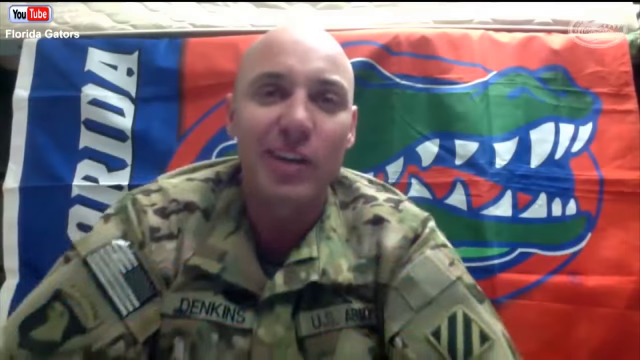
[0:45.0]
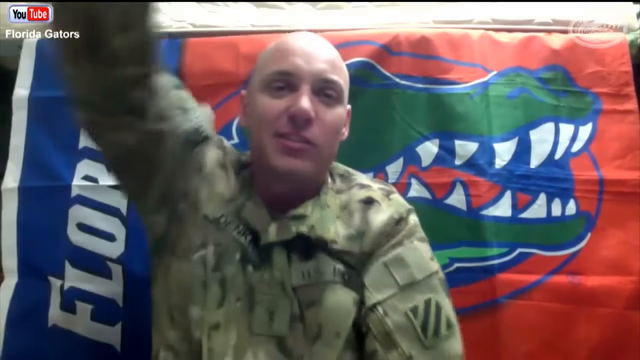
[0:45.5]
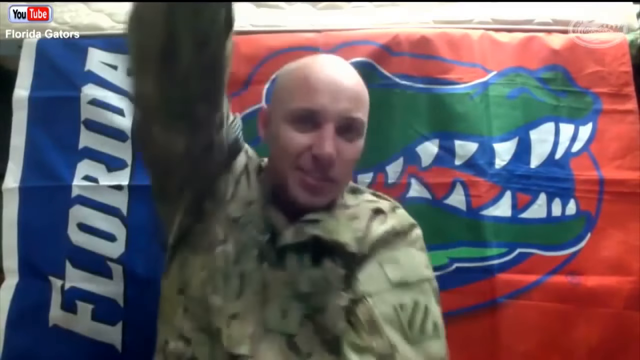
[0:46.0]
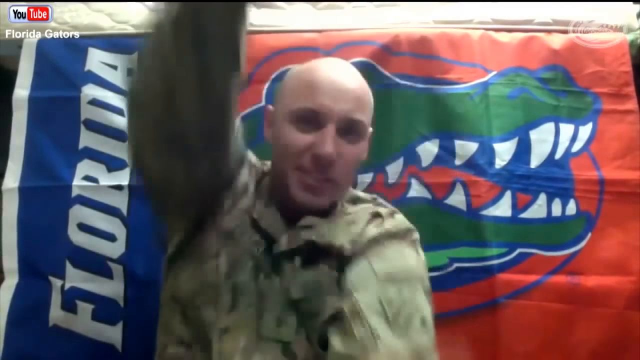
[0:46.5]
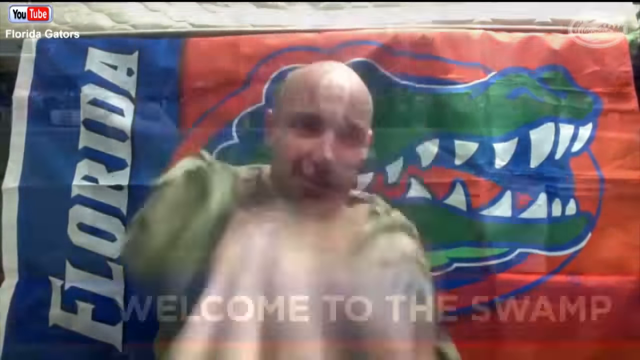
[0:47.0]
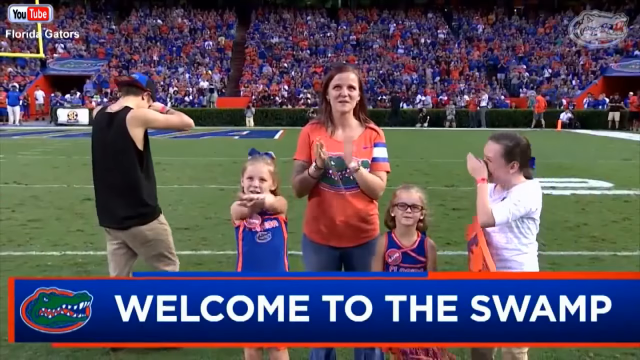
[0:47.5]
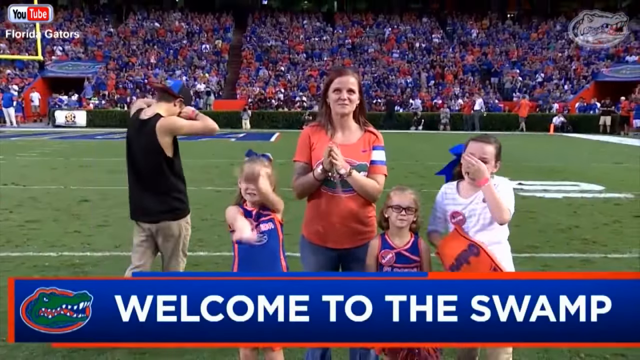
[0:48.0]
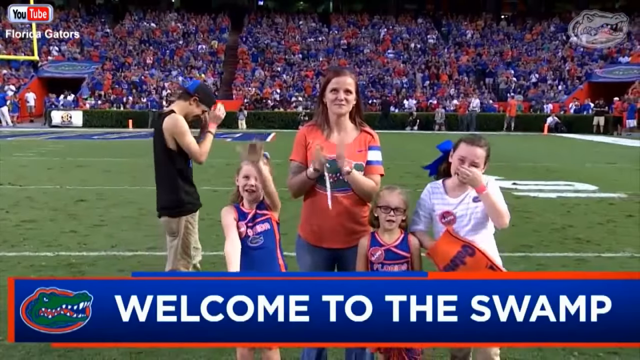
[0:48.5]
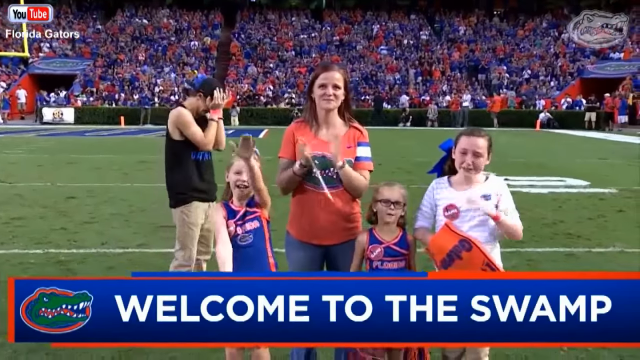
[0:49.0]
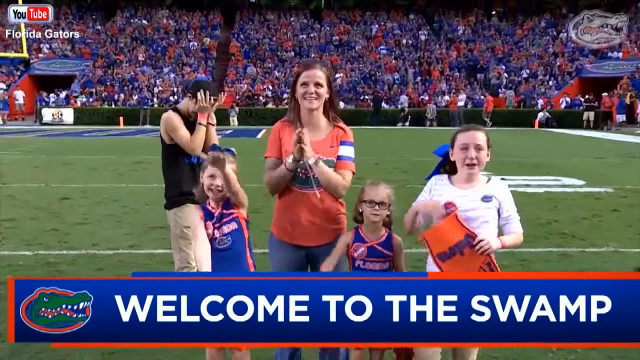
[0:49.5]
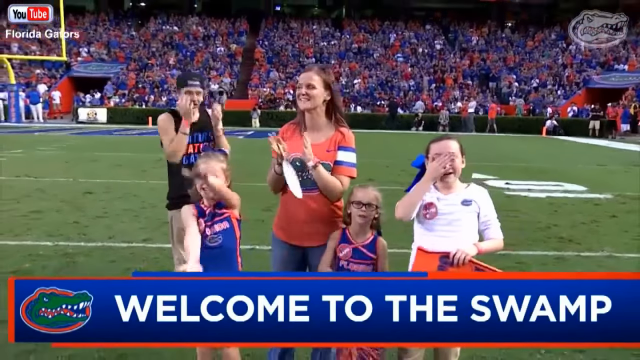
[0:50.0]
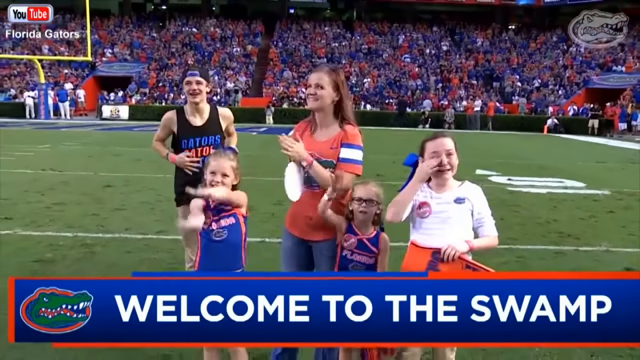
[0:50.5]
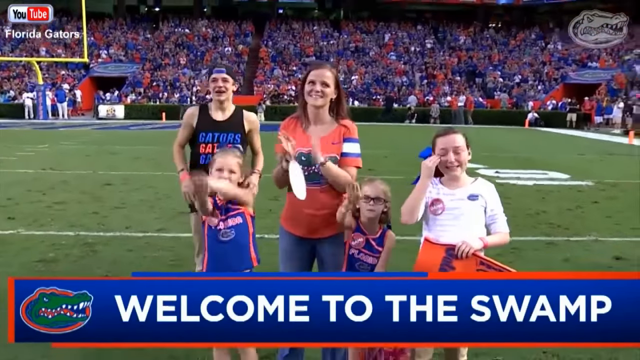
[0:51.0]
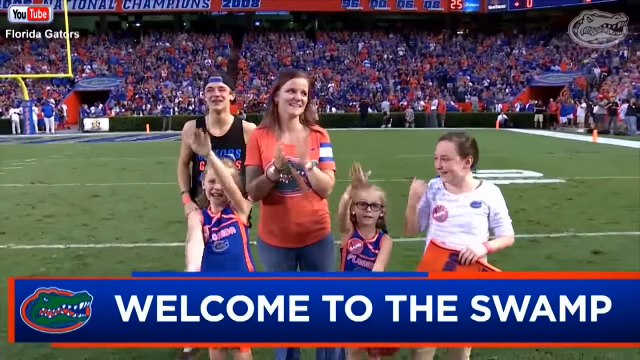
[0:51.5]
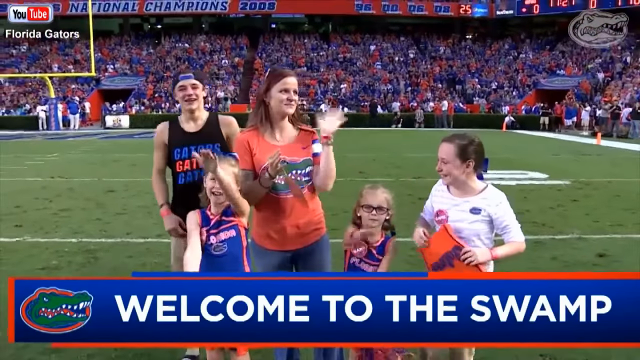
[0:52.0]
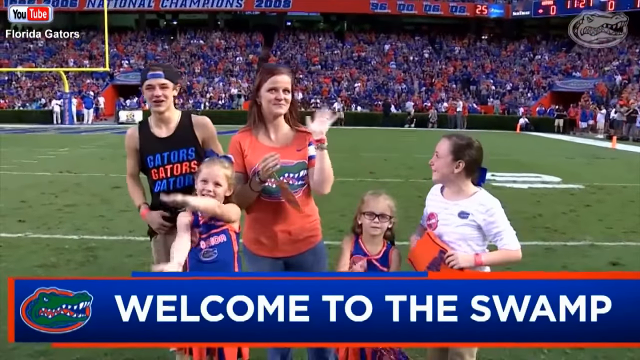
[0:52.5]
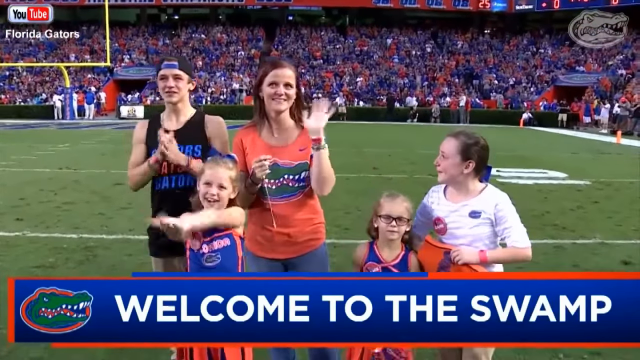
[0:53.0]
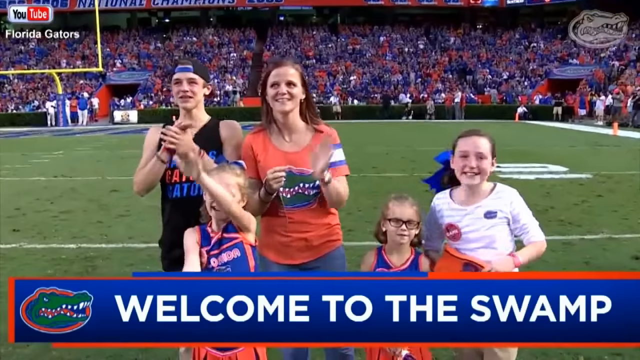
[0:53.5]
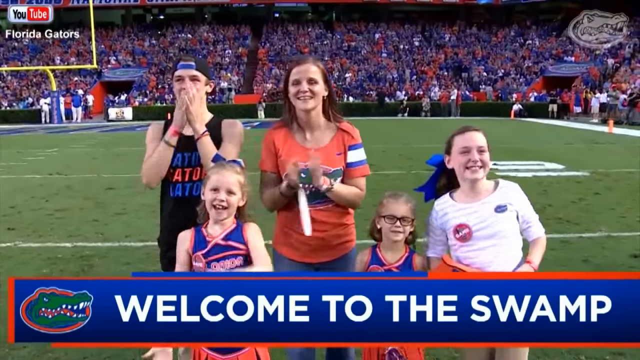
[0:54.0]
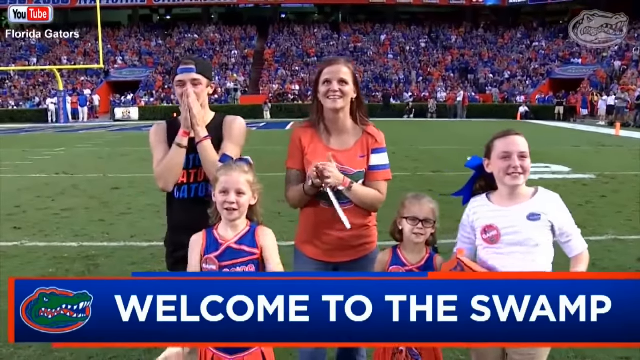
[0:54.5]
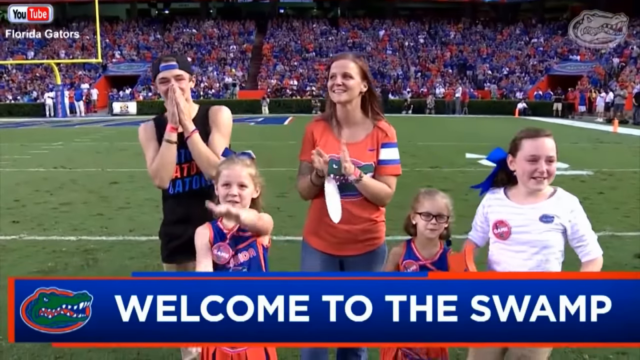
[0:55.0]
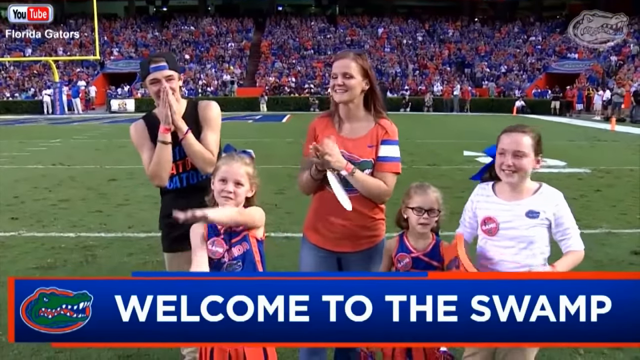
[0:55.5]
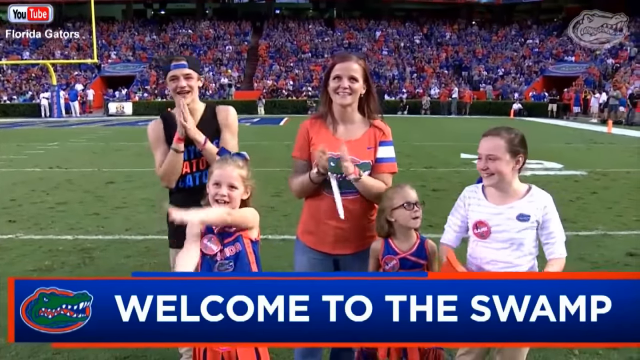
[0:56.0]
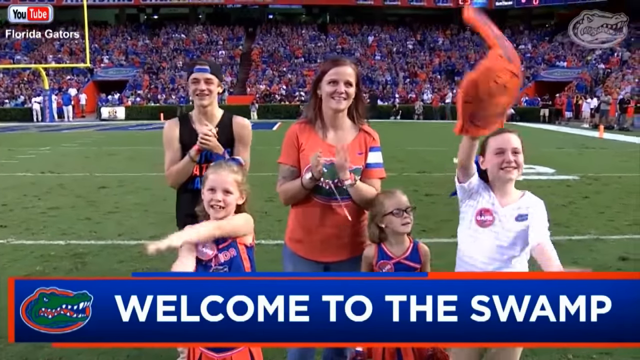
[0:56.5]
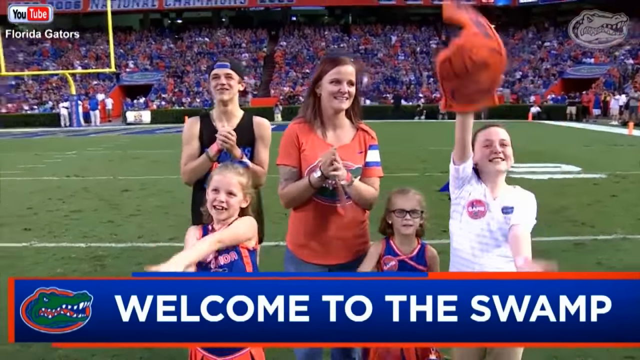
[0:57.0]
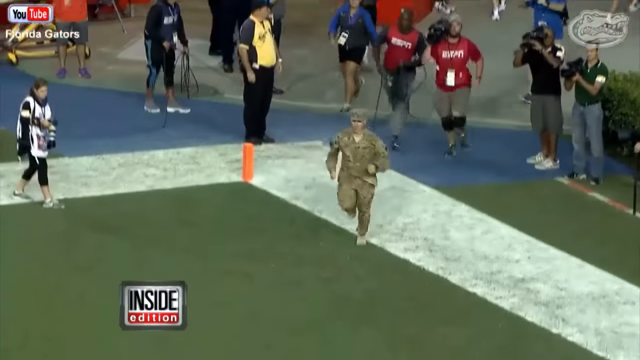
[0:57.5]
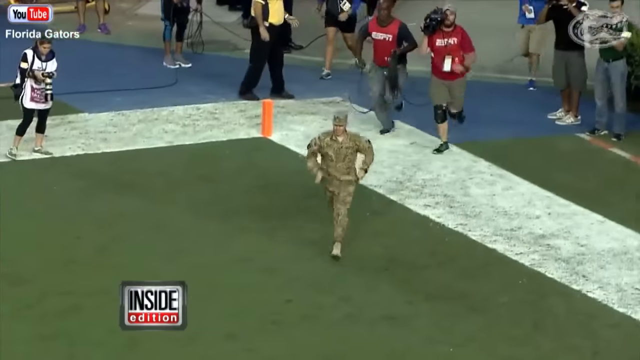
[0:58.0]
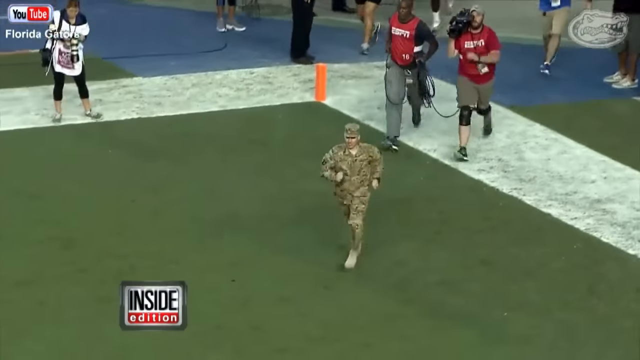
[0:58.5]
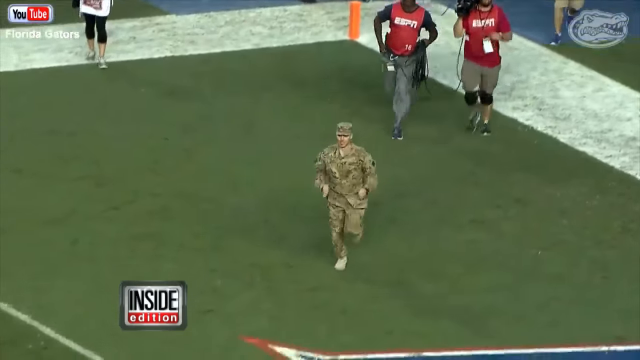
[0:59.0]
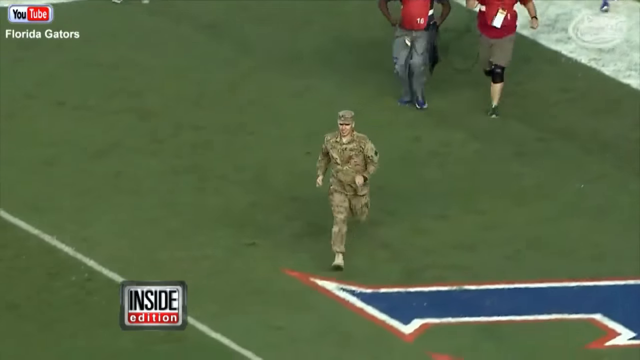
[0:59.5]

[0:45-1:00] In the video message, the dad does the gator chomp, and the family is shown reacting to it. The dad then runs out onto the field from one of the tunnels toward the family, revealing that he is actually at the stadium. The family — the three daughters, the mom and the son — is shown before the dad runs out.